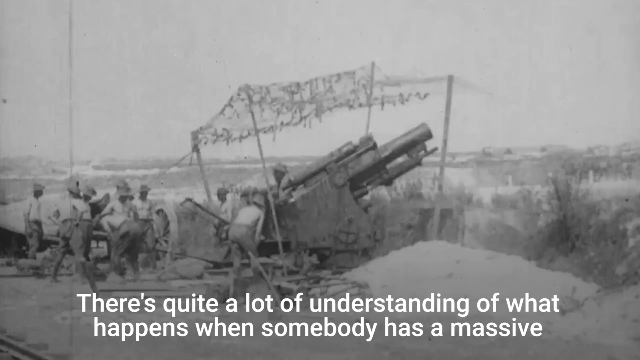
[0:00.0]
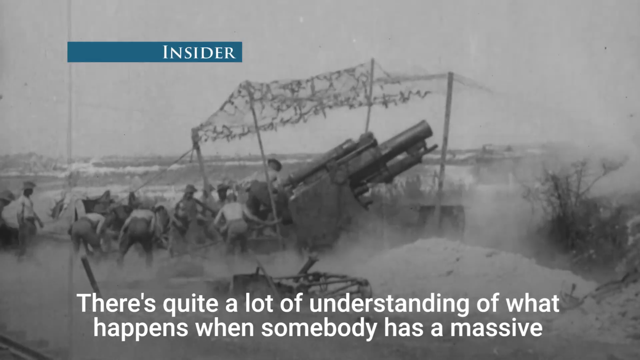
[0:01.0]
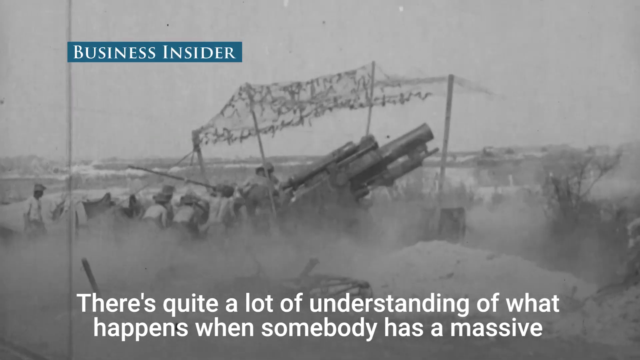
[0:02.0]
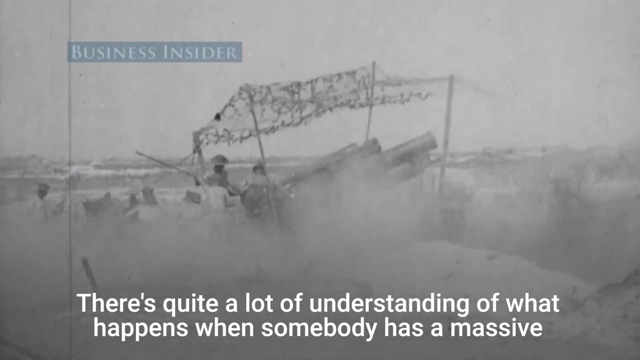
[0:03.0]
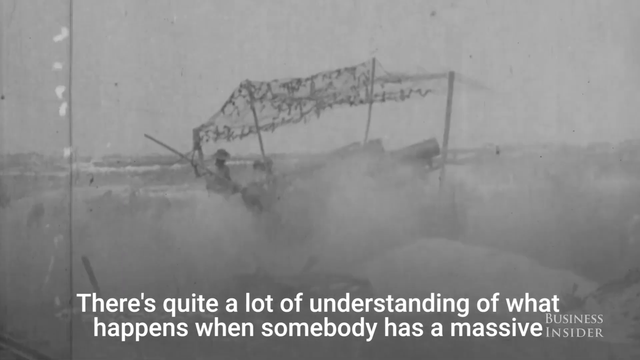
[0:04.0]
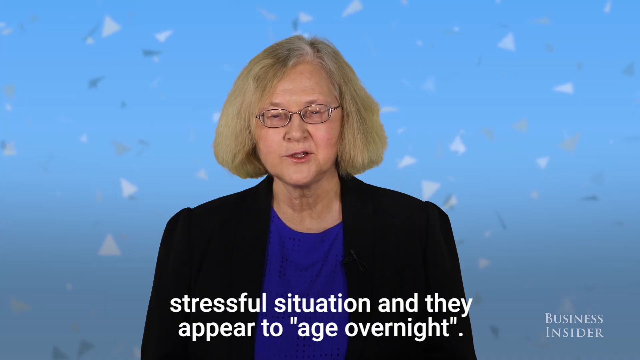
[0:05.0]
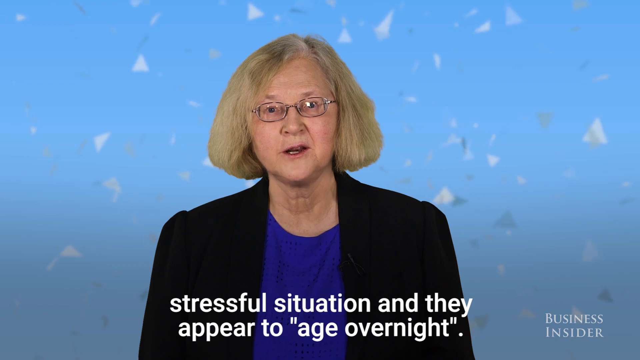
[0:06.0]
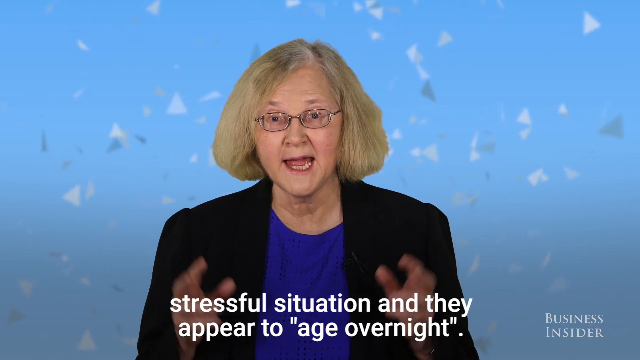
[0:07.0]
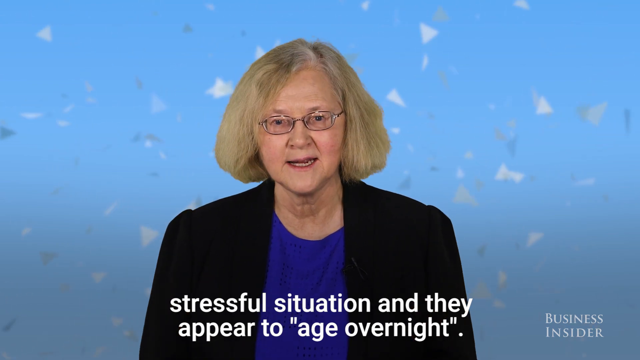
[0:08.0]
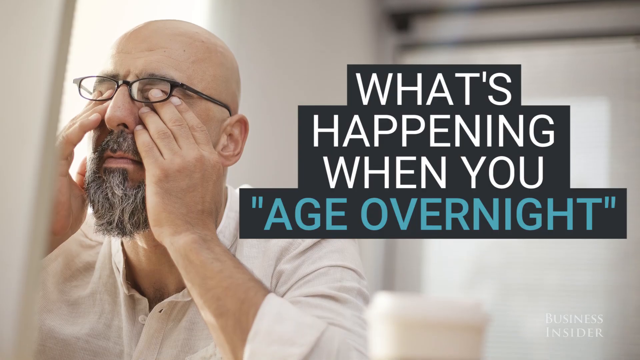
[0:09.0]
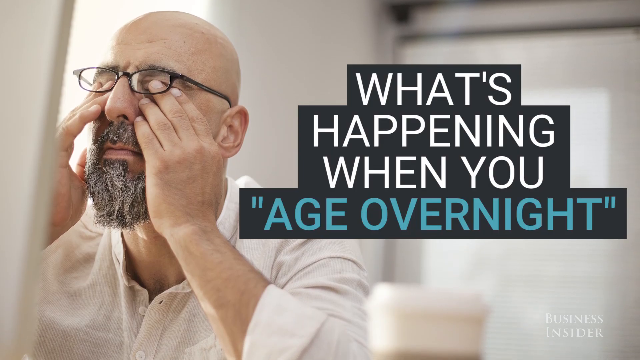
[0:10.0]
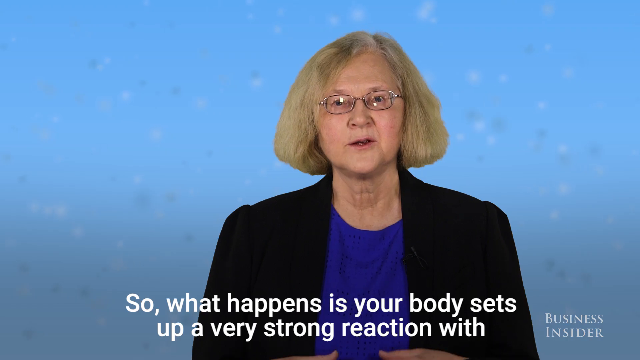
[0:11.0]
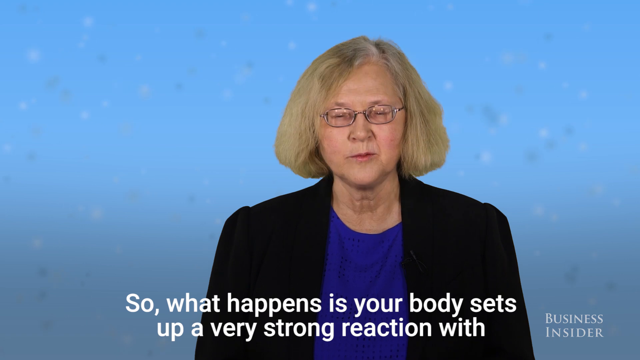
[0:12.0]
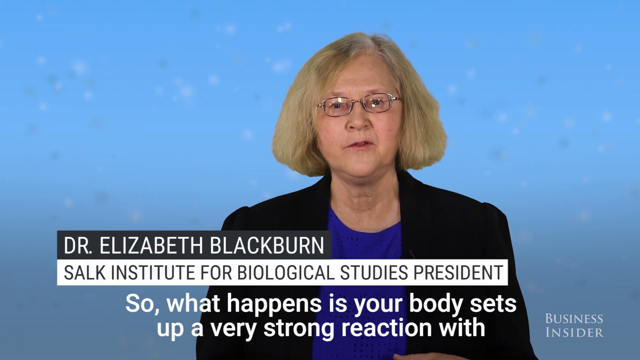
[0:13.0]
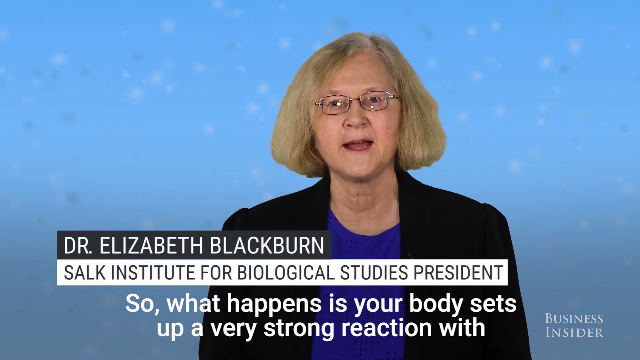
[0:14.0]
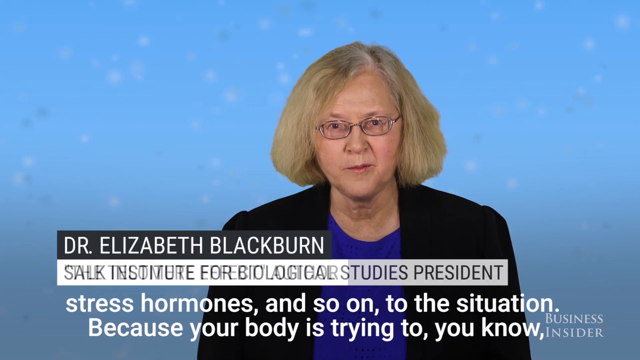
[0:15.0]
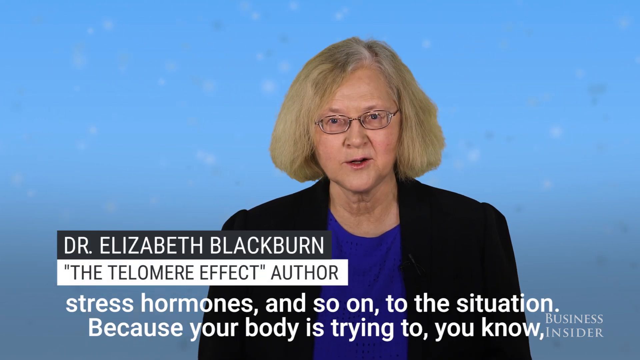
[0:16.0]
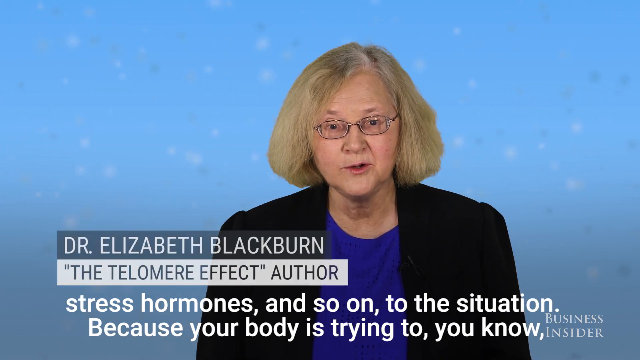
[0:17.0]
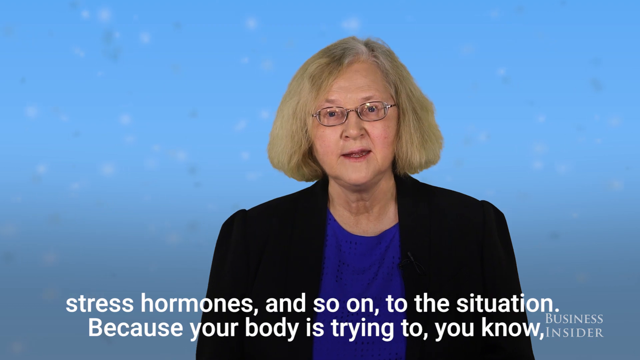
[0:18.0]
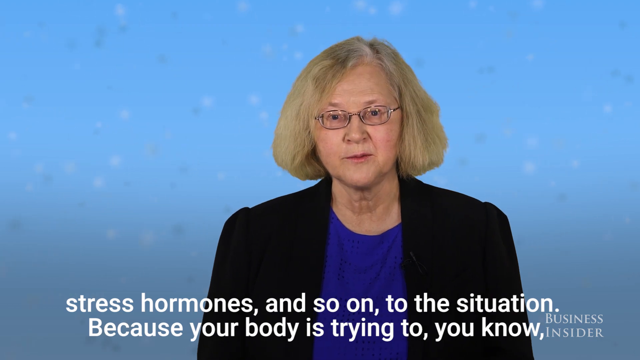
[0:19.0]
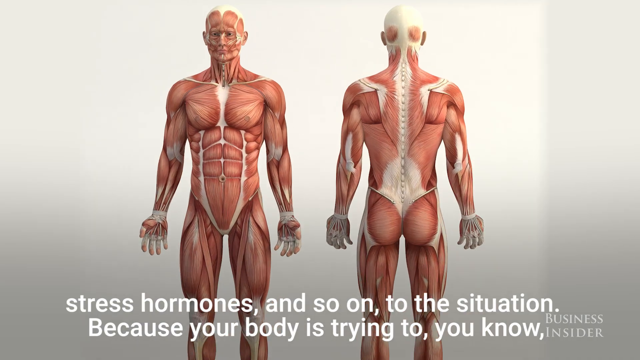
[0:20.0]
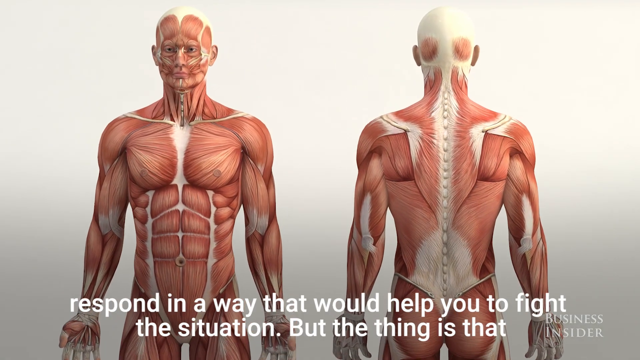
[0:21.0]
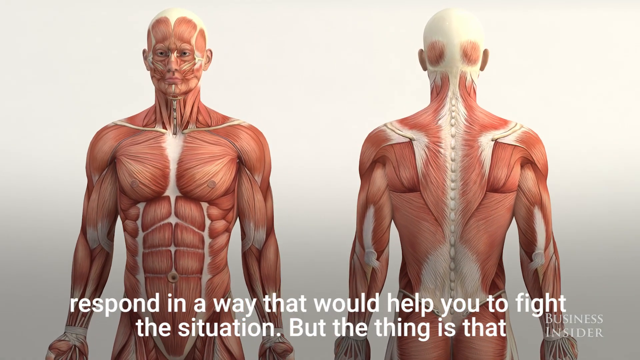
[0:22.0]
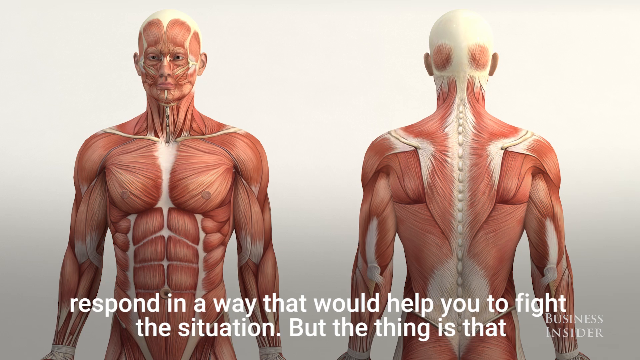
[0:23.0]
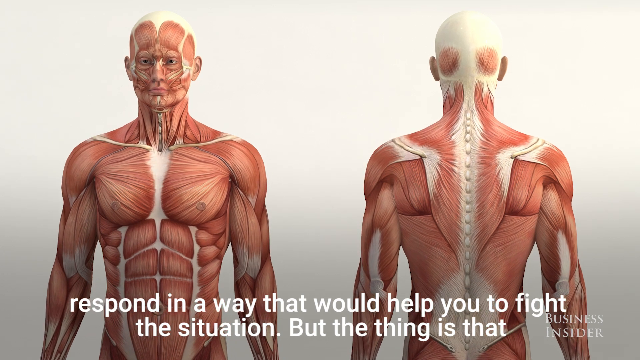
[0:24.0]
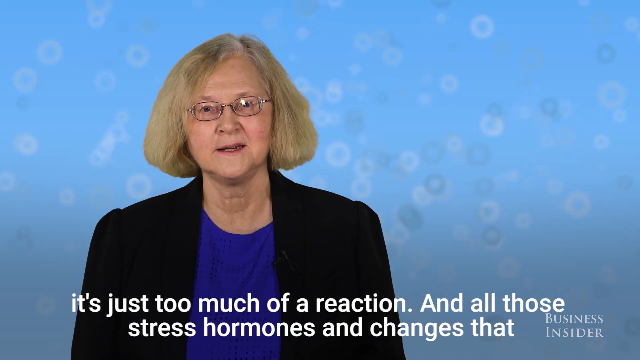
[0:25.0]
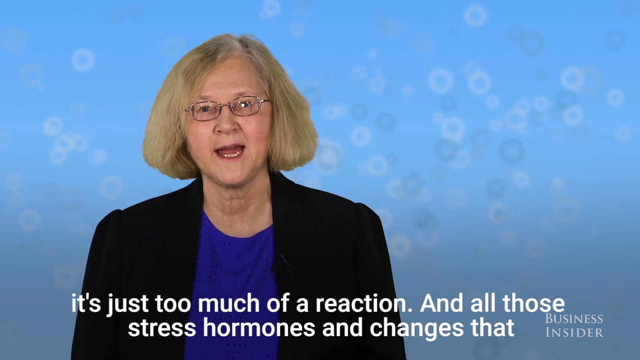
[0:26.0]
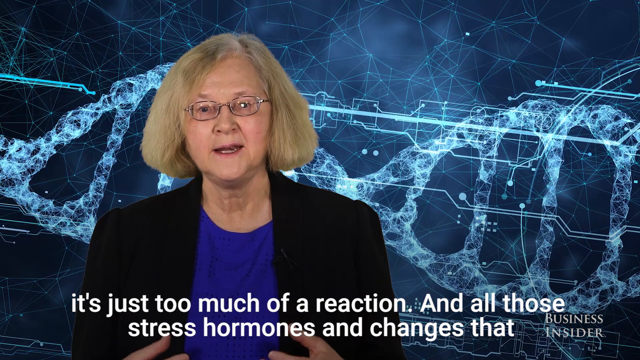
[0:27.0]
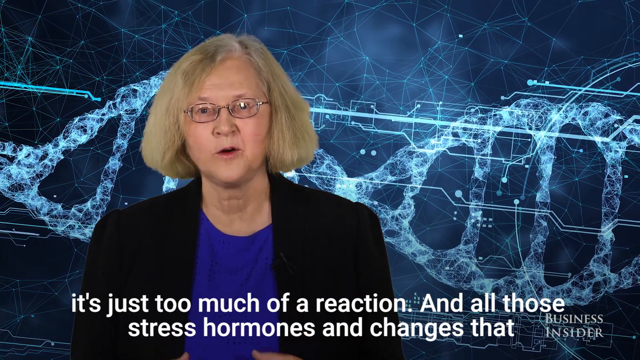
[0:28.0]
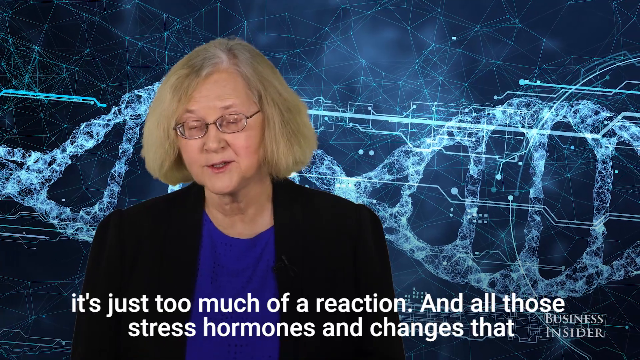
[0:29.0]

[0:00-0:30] The video opens with black-and-white film of a war scene in which a group of soldiers loads and fires an enormous cannon. In the top left, the text "Business Insider" appears. A subtitle reads, "there's quite a lot of understanding of what happens when somebody has a stressful situation, and they appear to, 'age overnight'." A woman then appears in front of a blue screen, wearing a blue shirt and a black jacket, with blonde hair and glasses, speaking to the camera. Next comes a shot of a bald man on the left with a mustache, a beard and small eyeglasses, rubbing his eyes underneath the glasses. The caption reads, "what's happening when you 'age overnight'?" The same blonde woman appears again and is identified as Dr. Elizabeth Blackburn, Salk Institute for Biological Studies president. The caption continues, "so what happens is your body sets up a very strong reaction with stress hormones and so on to the situation because your body is trying to, you know, respond in a way that would help you fight the situation." An illustration follows of the front and back of a human body showing the muscular system underneath the skin, while the caption continues, "but the thing is that you respond in a way it's just too much of a reaction. And all those stress hormones and changes, they happen."